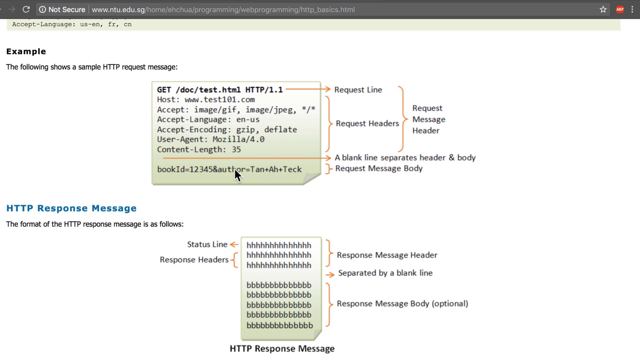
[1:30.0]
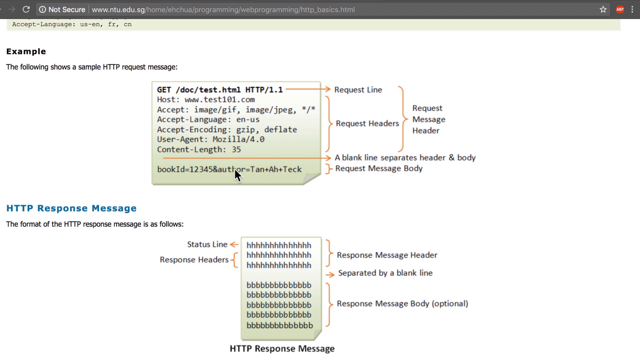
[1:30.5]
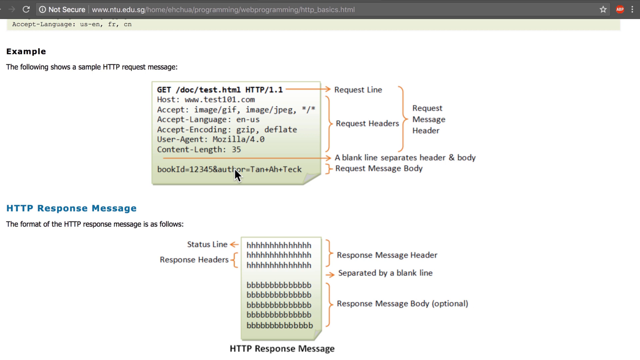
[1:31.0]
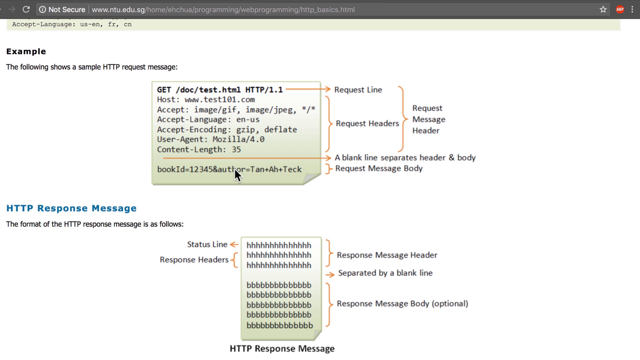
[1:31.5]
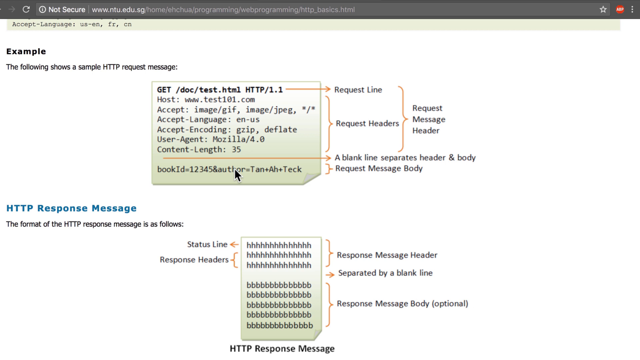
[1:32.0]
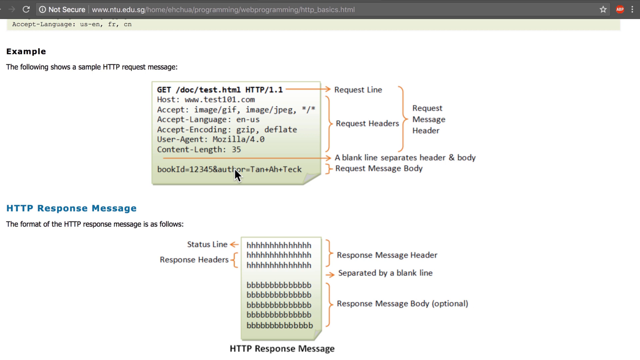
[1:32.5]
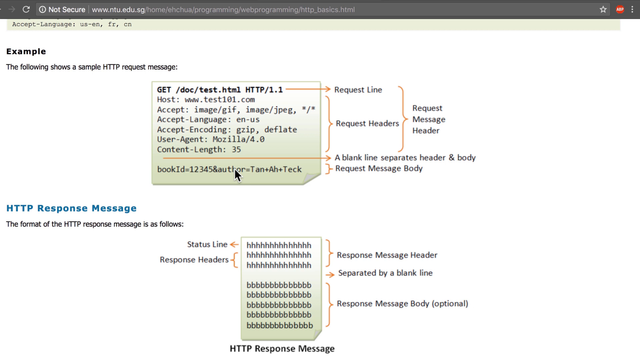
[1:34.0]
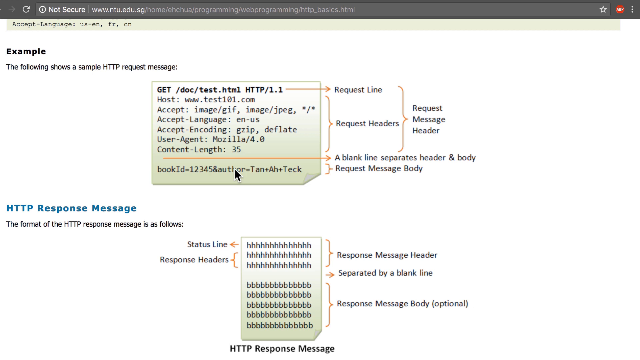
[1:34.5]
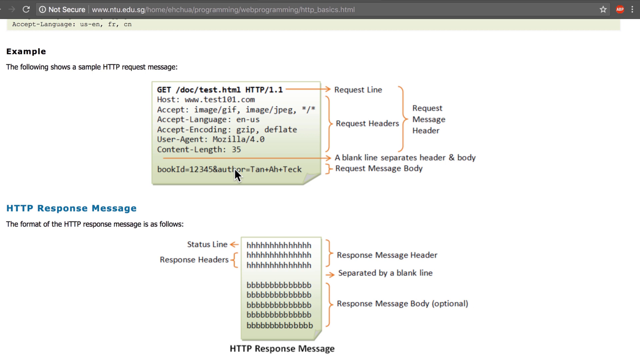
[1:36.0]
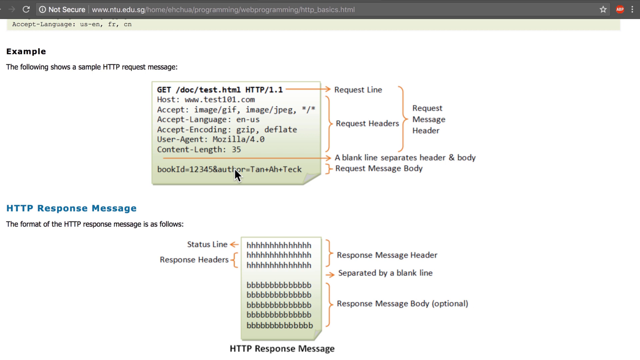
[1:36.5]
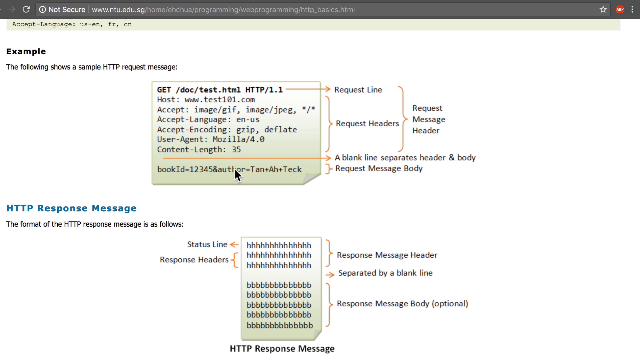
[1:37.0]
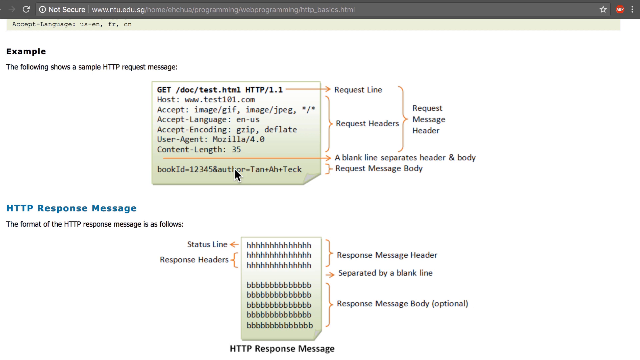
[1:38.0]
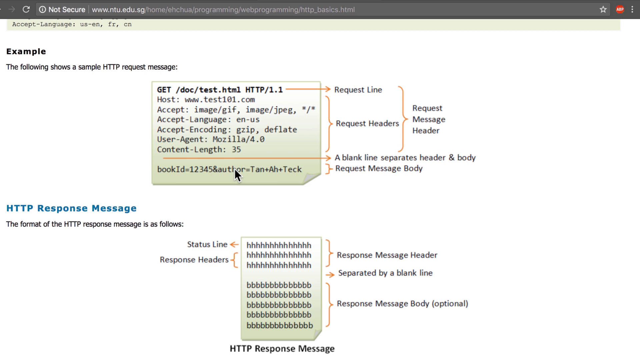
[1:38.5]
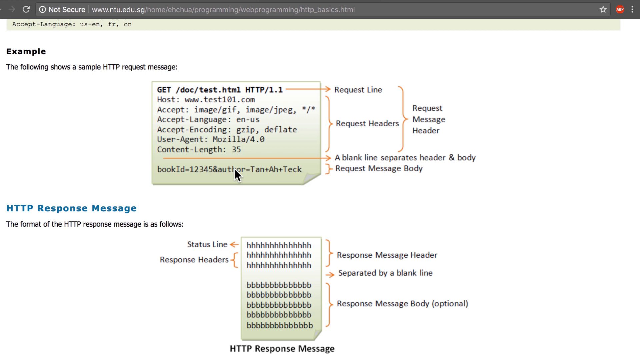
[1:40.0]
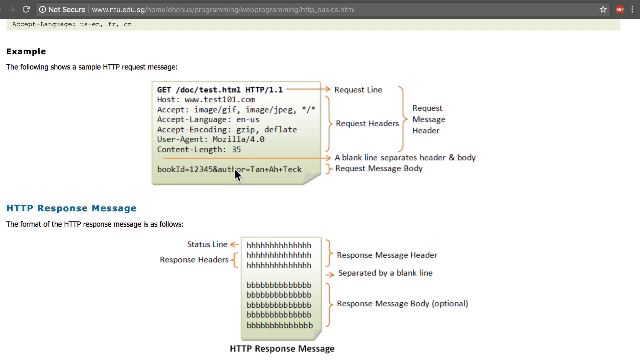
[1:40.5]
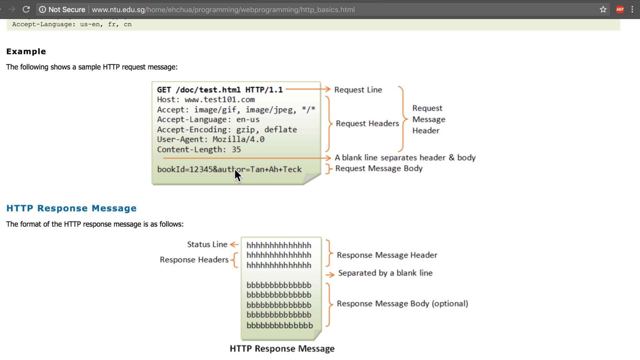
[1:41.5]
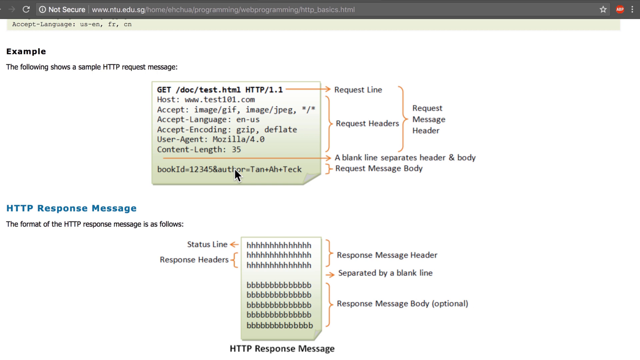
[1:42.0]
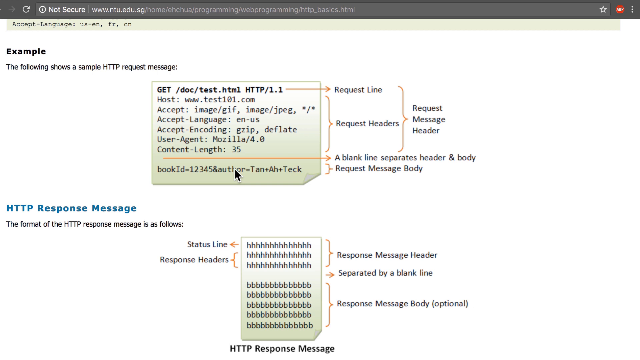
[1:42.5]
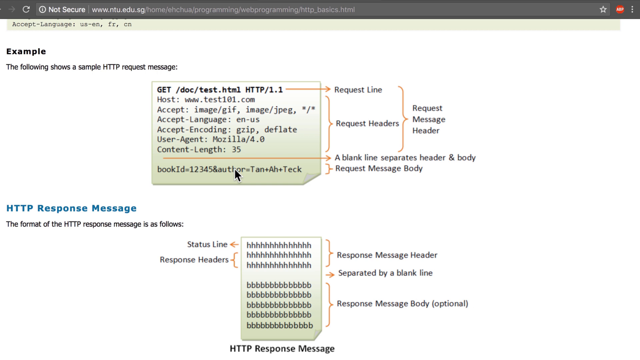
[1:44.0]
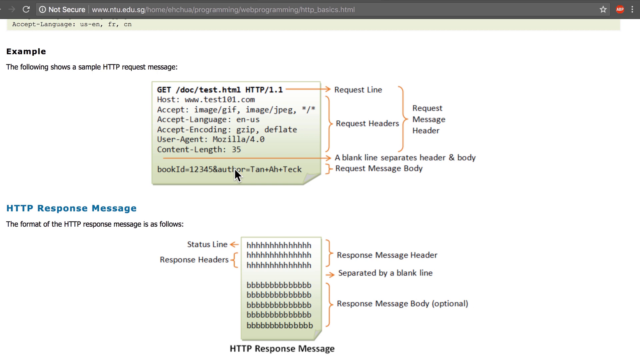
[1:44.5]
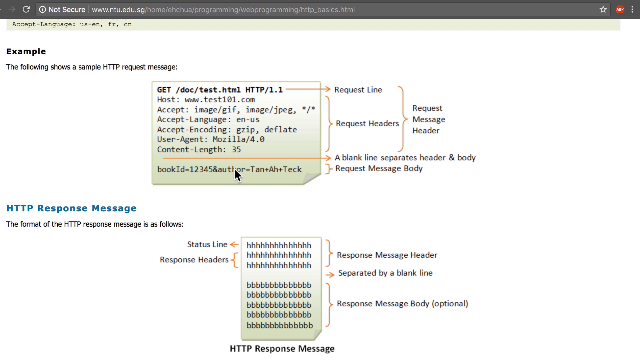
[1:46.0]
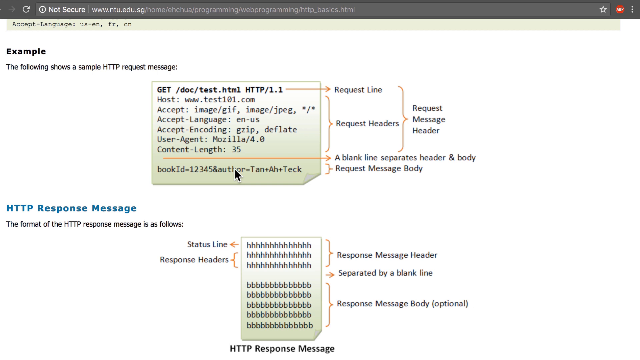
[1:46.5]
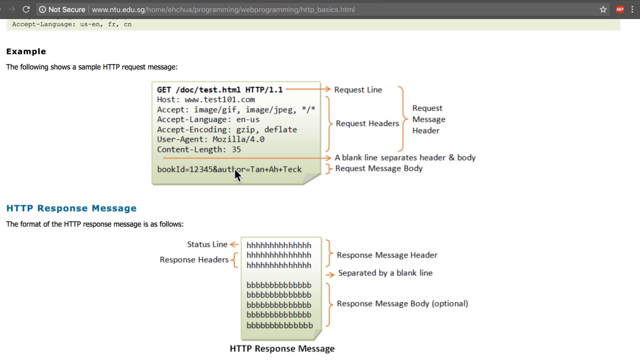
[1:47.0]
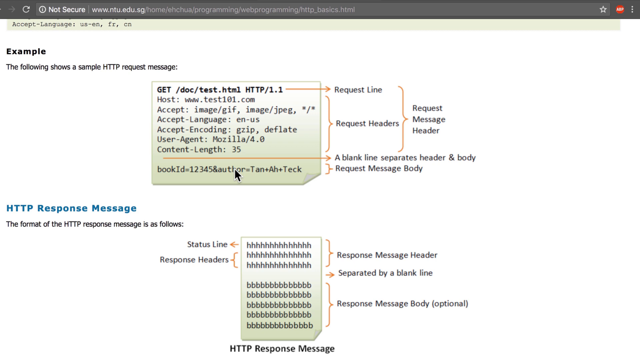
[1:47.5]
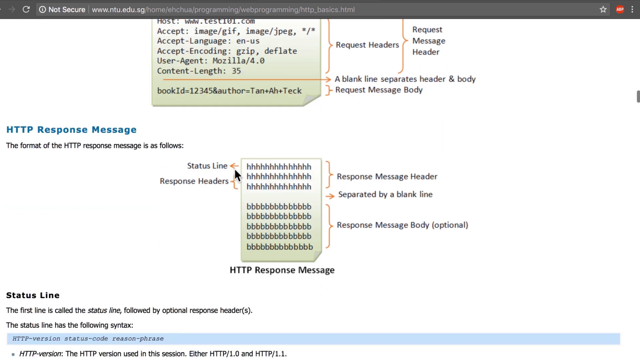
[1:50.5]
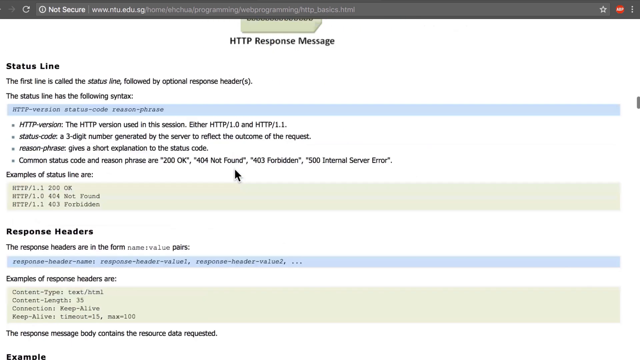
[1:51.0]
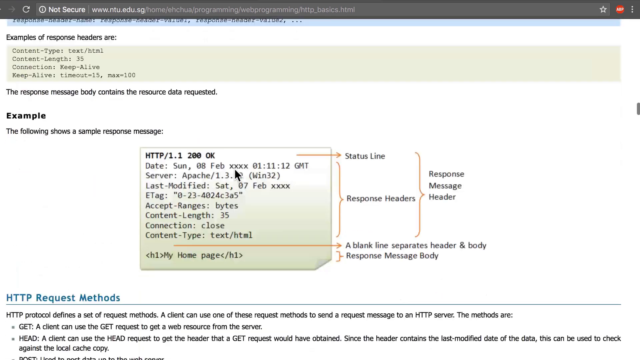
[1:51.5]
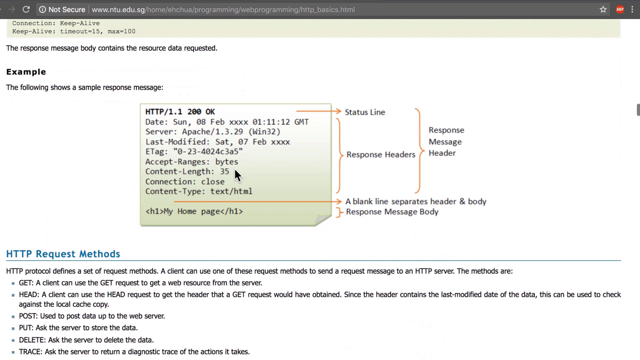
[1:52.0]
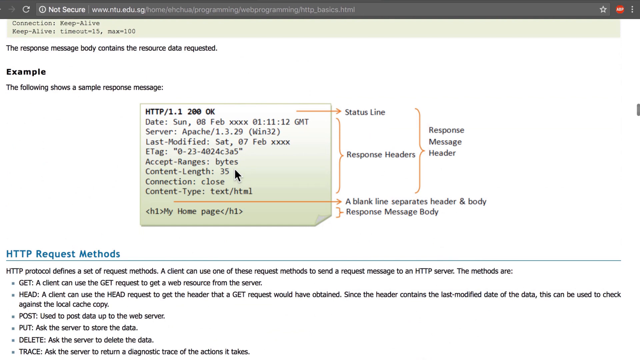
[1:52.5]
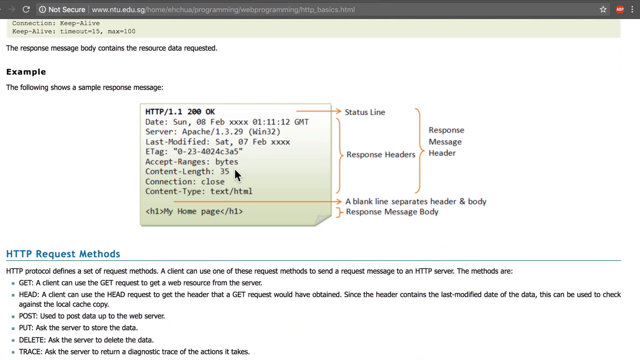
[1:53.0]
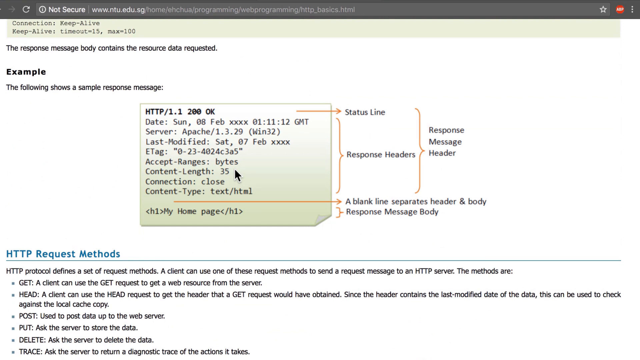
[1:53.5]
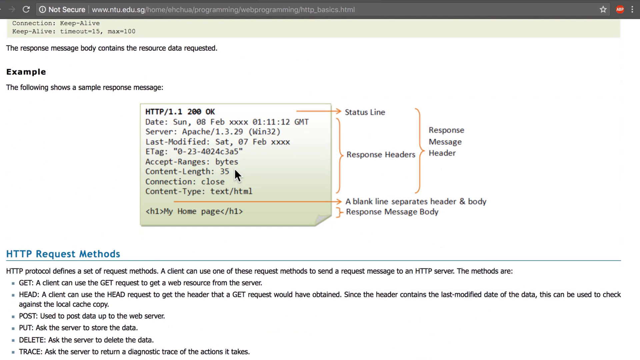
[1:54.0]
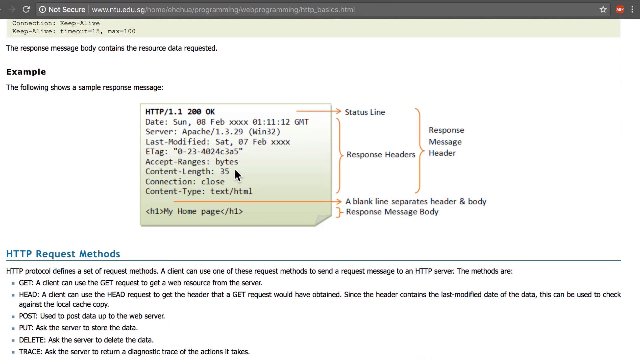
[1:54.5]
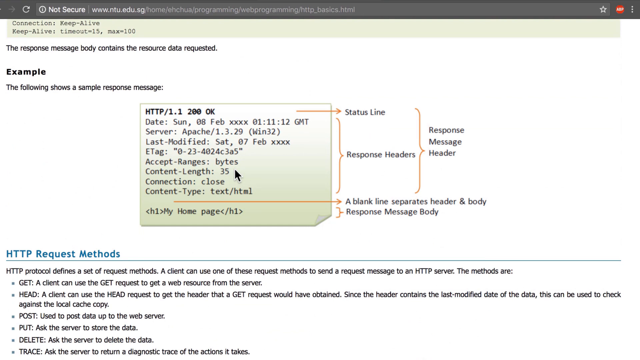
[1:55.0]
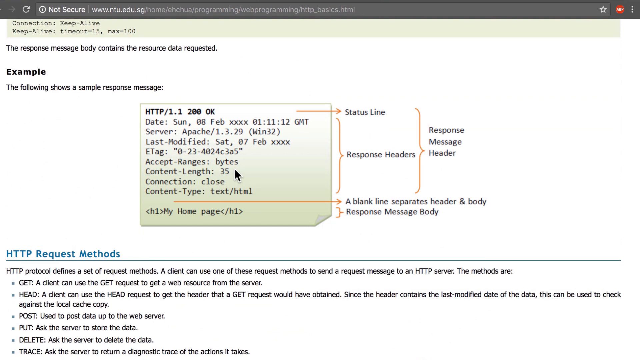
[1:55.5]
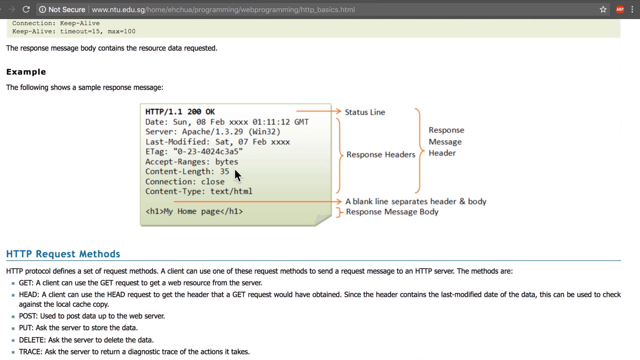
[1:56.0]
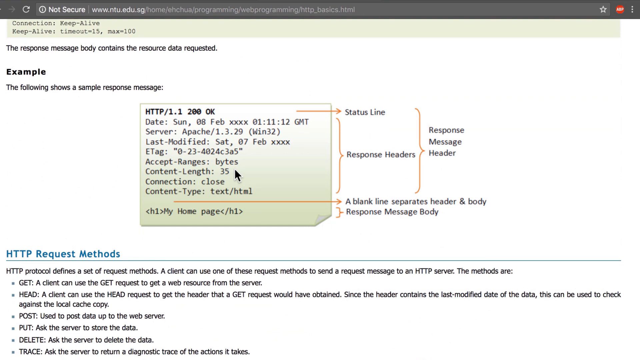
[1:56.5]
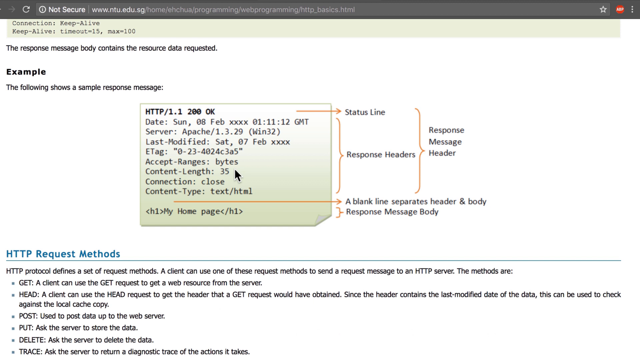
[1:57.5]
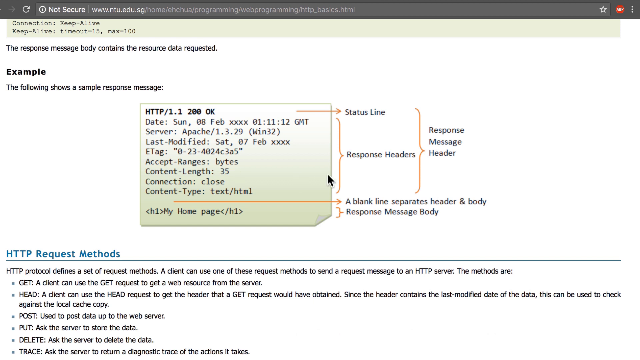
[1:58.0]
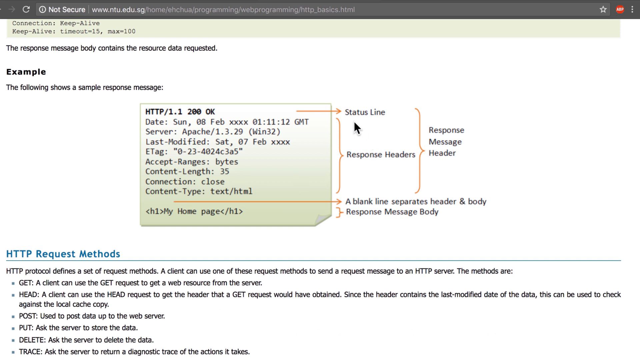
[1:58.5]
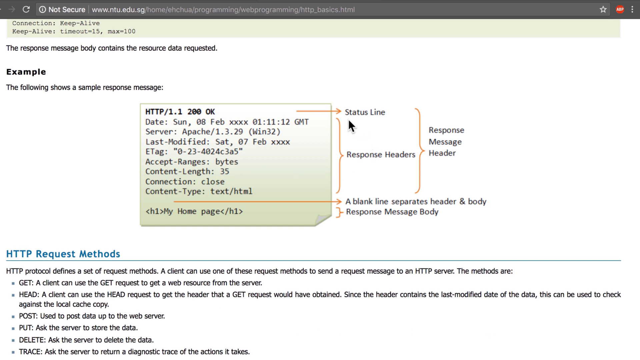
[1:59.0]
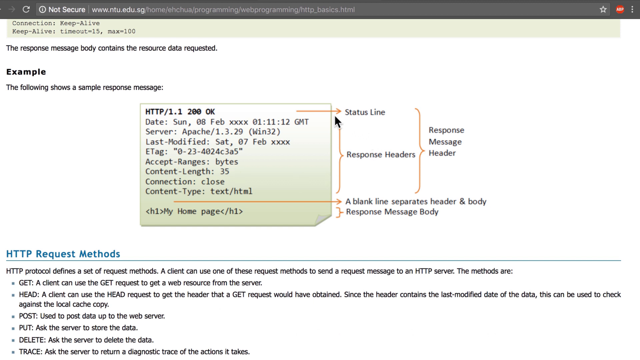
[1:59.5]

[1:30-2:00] The page begins with an example, and underneath text reads "the following shows a sample HTTP request message." A small box that looks like a paper tab reads "get /./test HTML" and shows it being requested from test101.com, illustrating how the information goes out. The narrator's mouse moves around a little over the image. Beneath the top image is another message, "HTTP response message," whose format looks slightly different from the one above; it is all in Hs and Bs and shows messages mostly coming in. Scrolling down, the next example shows a different Apache server, with the status line and response line looking about the same, and the information laid out in a chart.